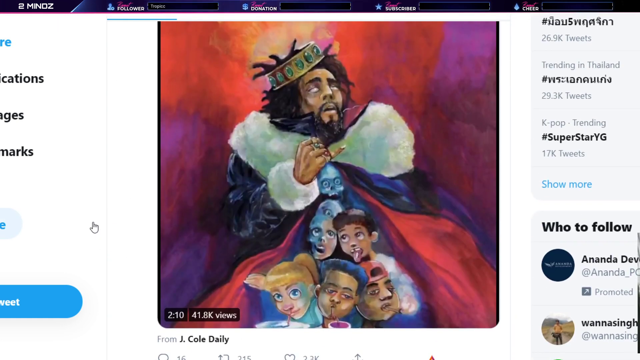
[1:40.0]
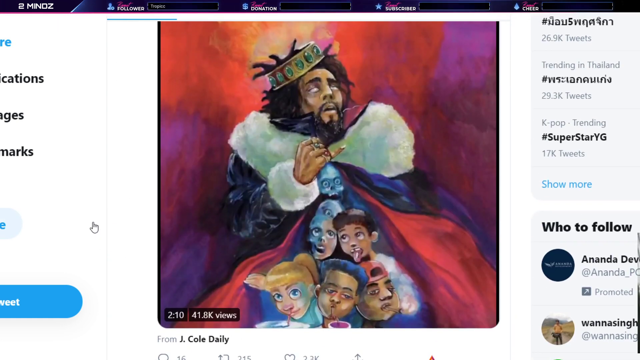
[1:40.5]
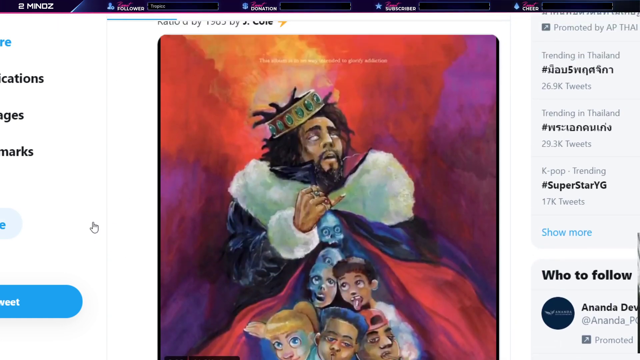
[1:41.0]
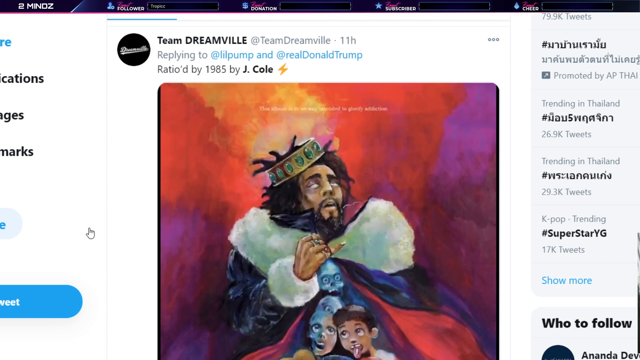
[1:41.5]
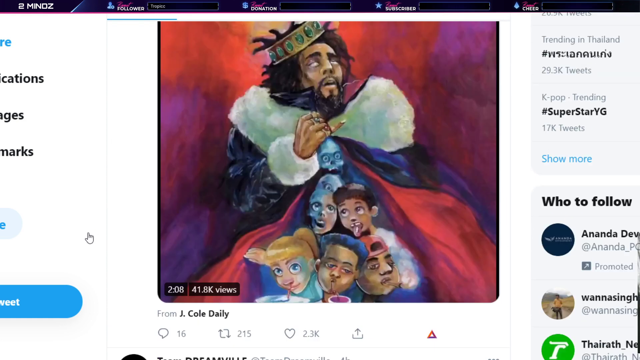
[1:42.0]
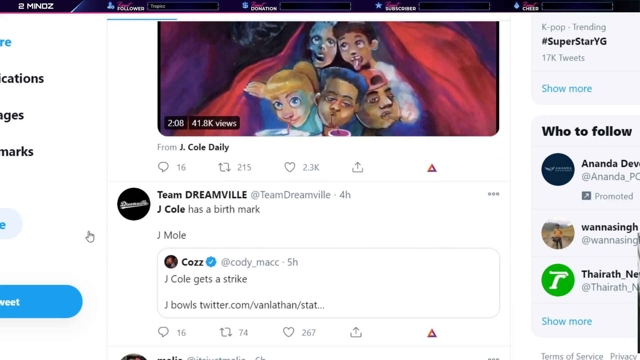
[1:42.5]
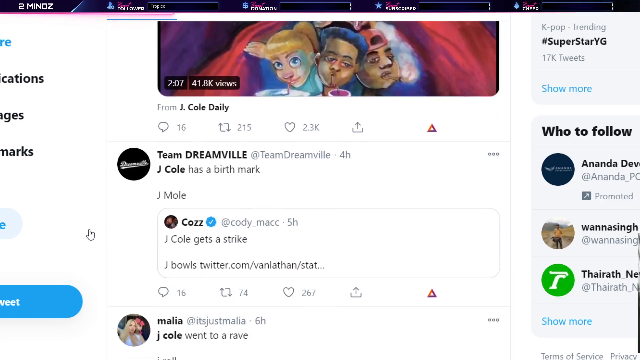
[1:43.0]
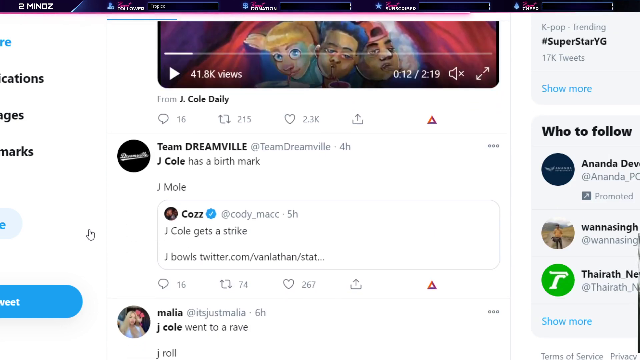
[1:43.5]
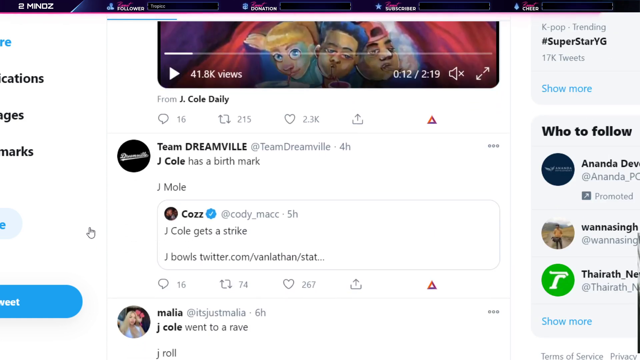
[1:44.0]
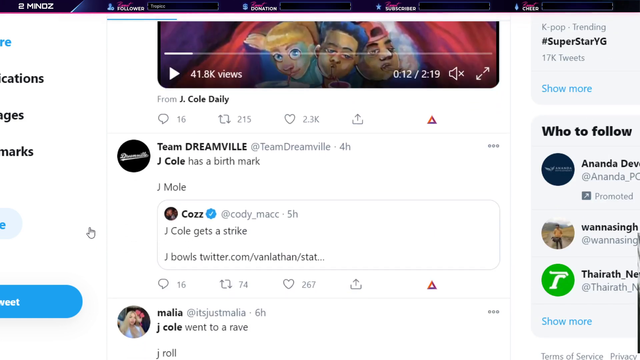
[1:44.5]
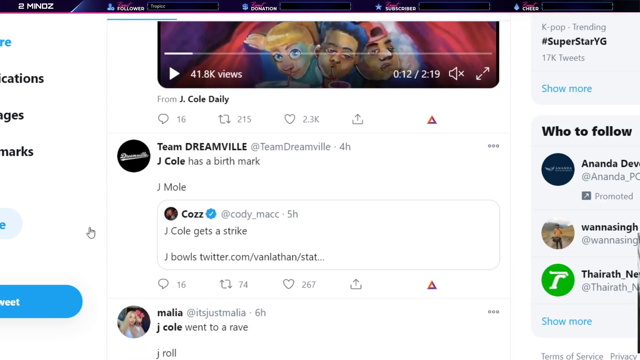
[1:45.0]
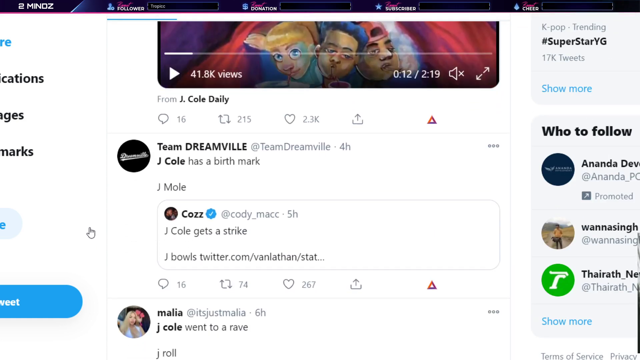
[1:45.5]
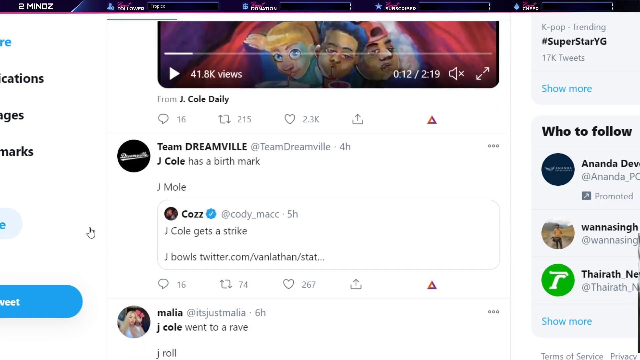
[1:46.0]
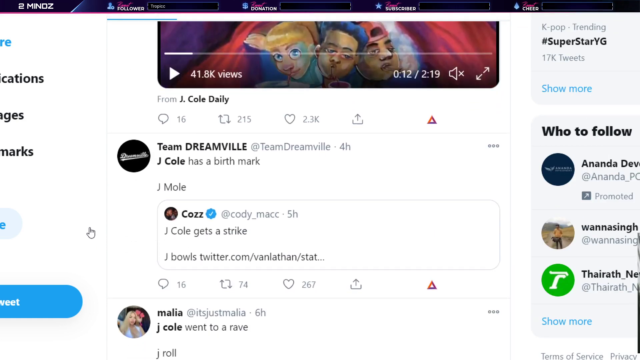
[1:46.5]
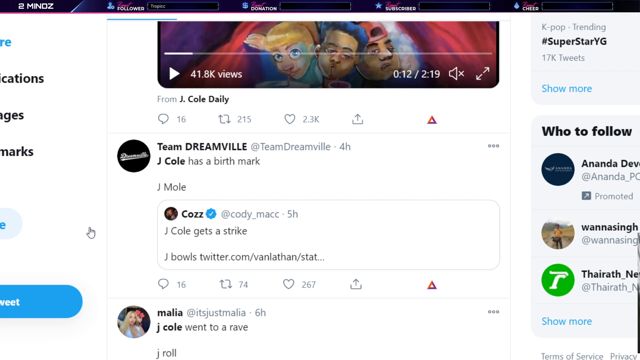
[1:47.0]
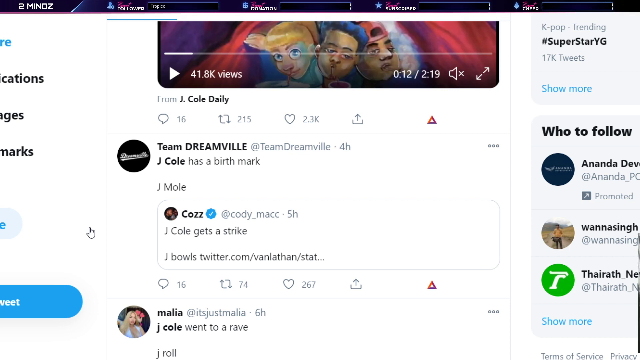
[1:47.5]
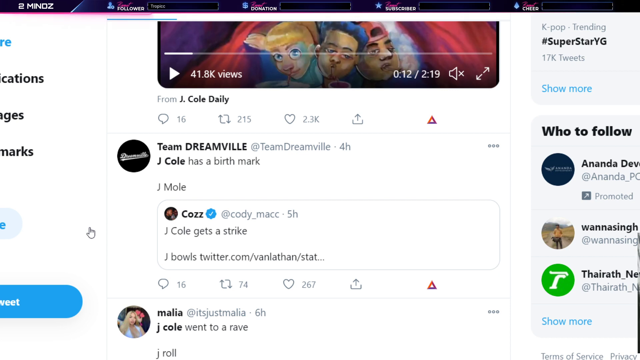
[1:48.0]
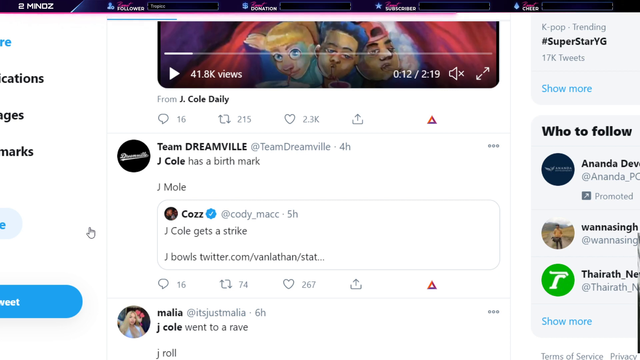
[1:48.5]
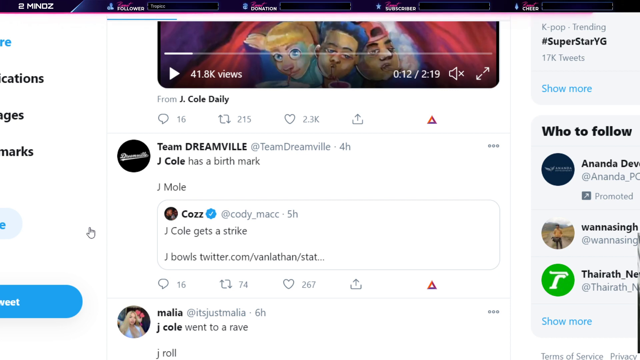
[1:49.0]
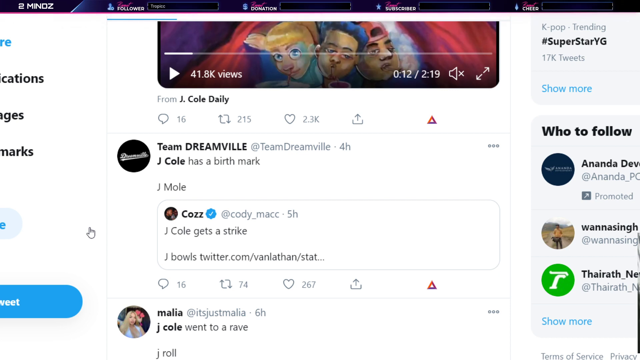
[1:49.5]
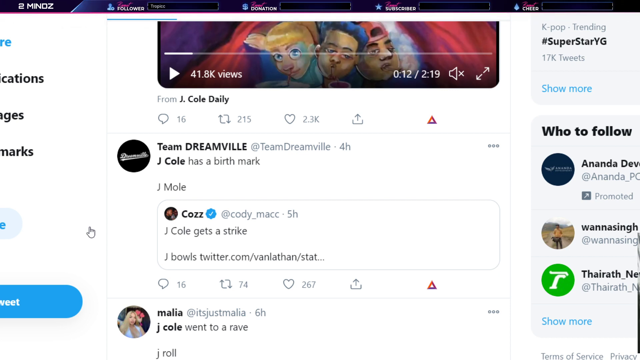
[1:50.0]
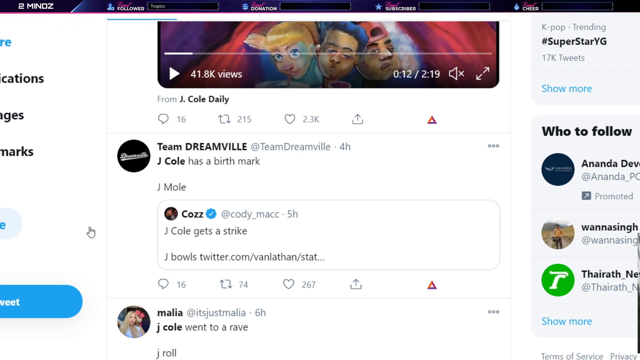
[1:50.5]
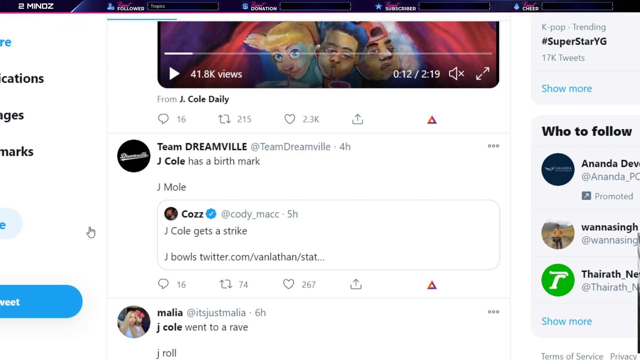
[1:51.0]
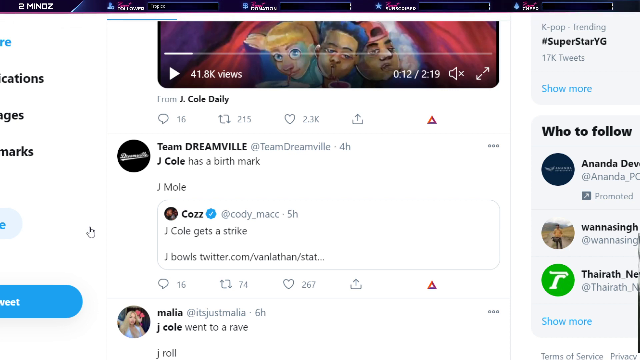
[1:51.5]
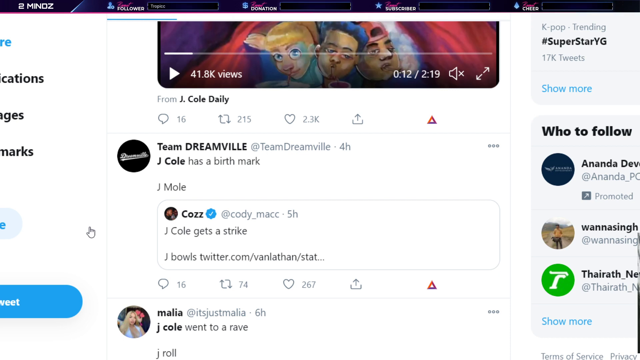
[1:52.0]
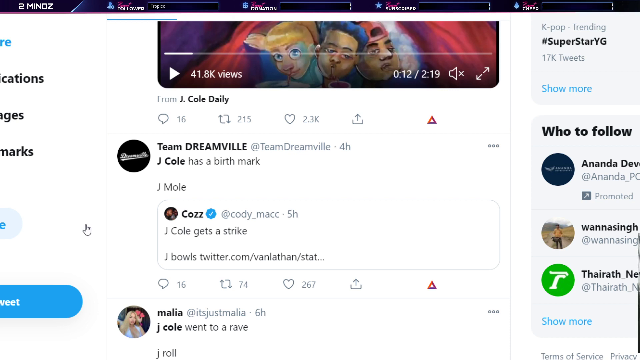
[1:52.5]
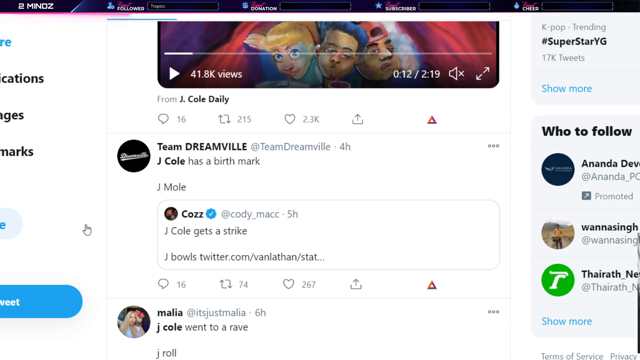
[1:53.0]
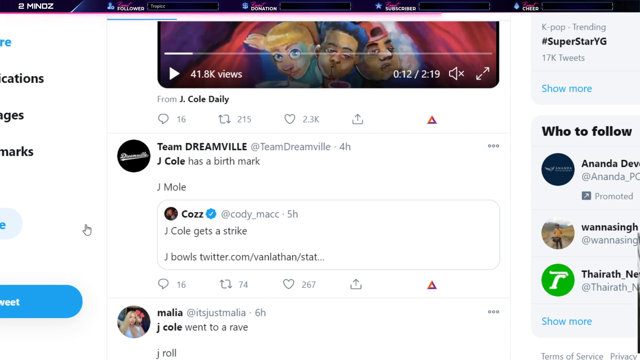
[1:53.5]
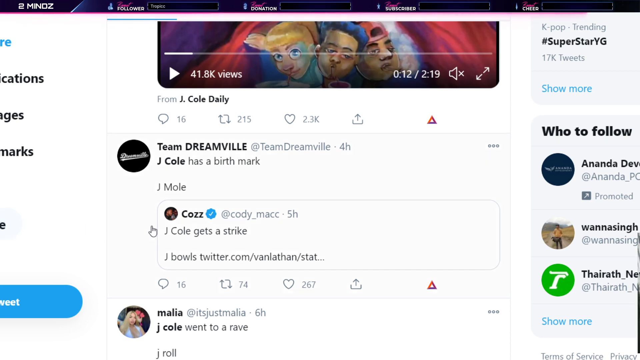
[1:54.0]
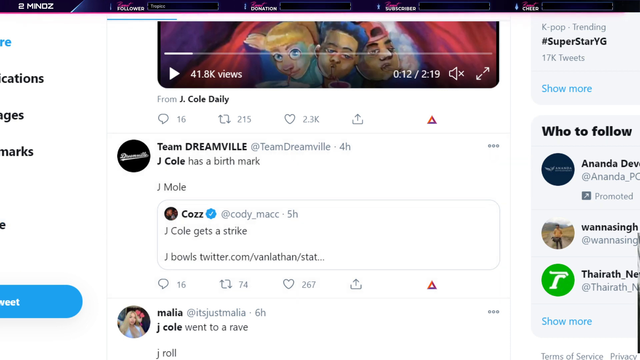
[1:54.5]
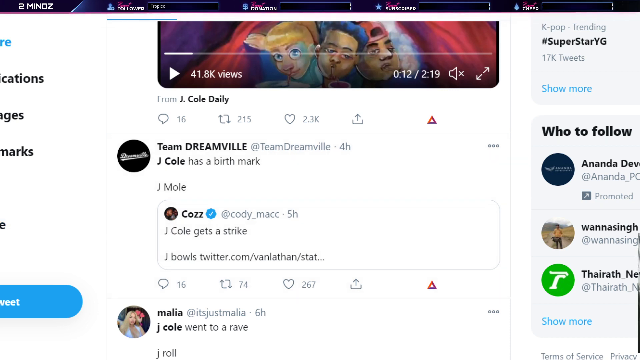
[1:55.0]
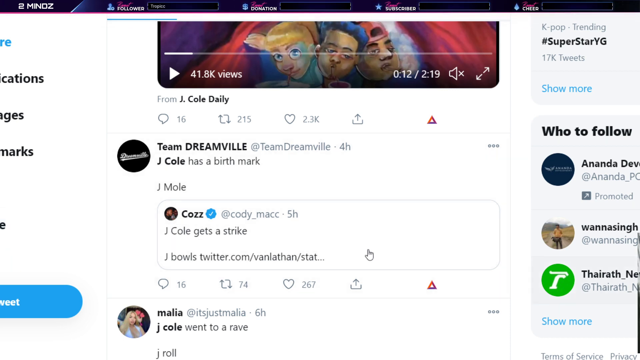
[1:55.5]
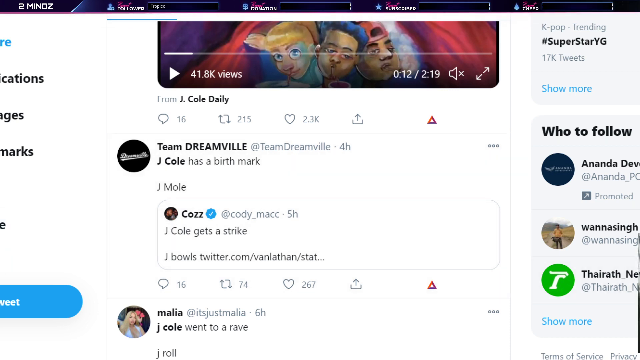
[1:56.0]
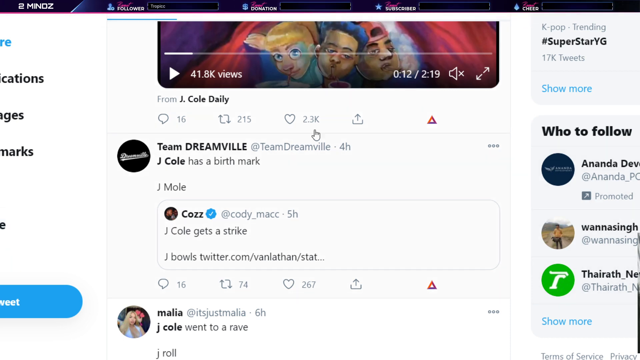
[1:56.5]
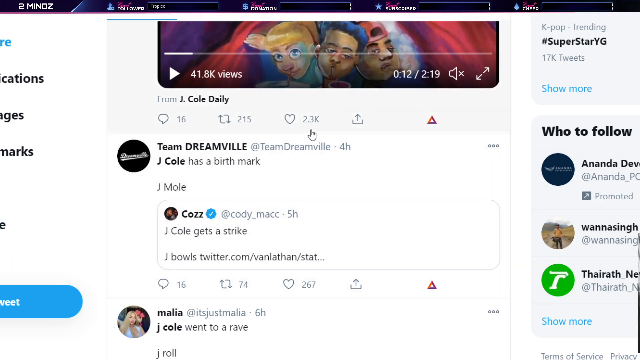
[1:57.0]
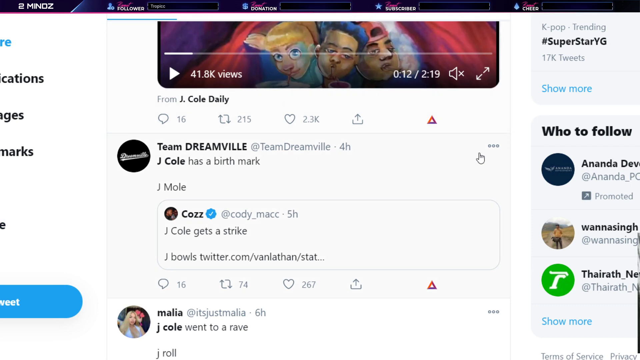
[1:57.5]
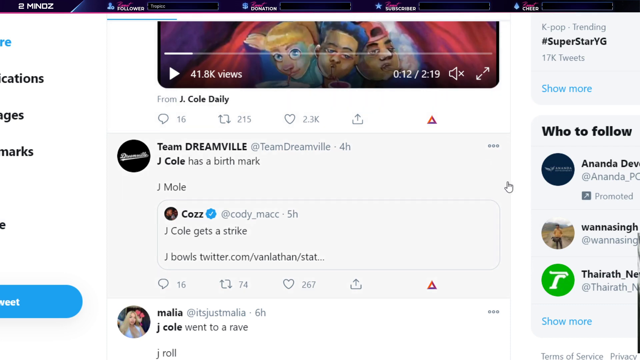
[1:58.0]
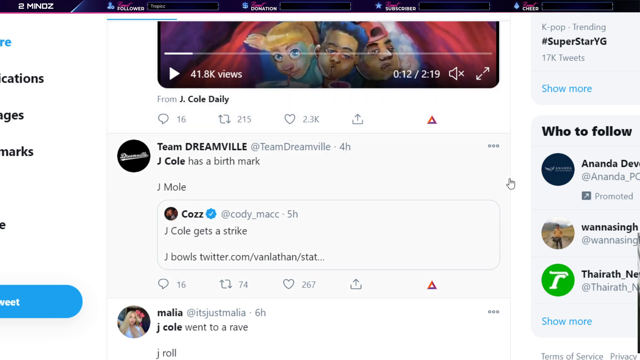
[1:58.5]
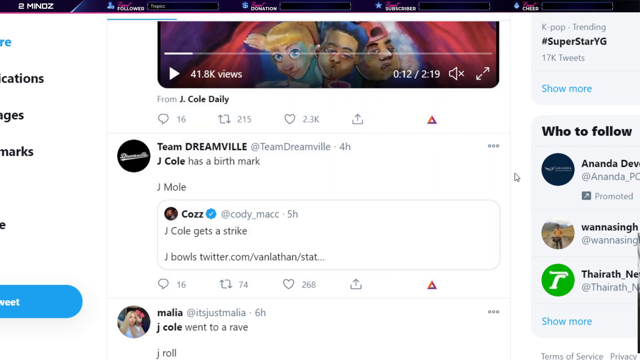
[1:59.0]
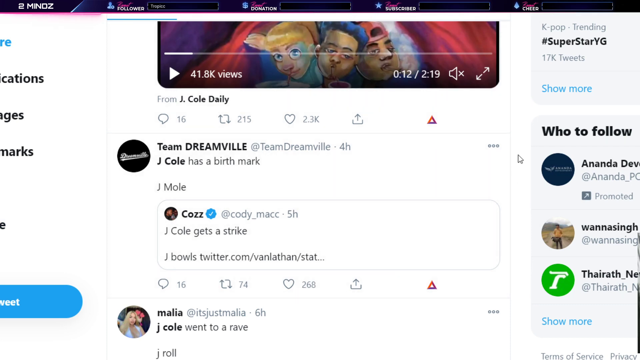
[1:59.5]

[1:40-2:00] The painting of J. Cole wearing a crown, with people on his coat, is visible, and the user scrolls up to show the heads of the people at the bottom of the coat: one woman and three men. The woman has yellow hair and big eyes and is white. The first man has a haircut, looks like he is carrying a drink, and is black. The third man wears a cap backwards. The person scrolls a little more, and more tweets from Team Dreamville posted four hours ago become visible. On the right of the screen there is a who to follow section, with another account being promoted. Everything shown is about J. Cole.